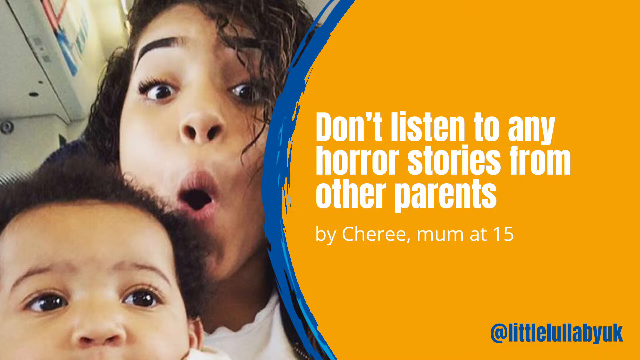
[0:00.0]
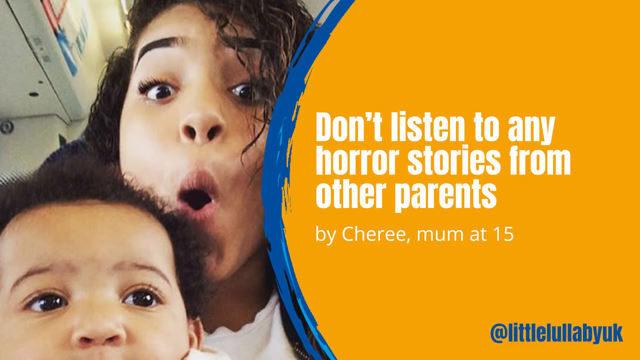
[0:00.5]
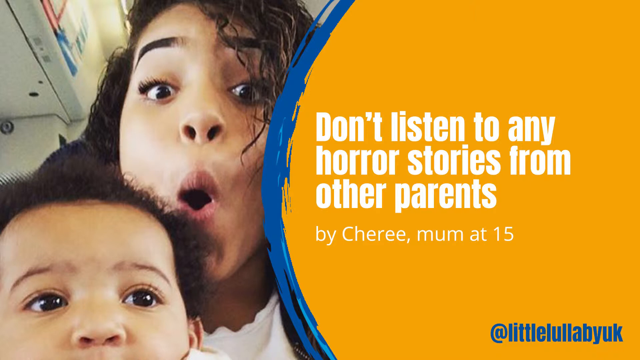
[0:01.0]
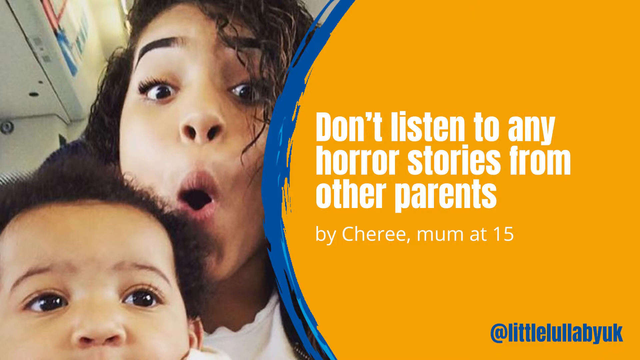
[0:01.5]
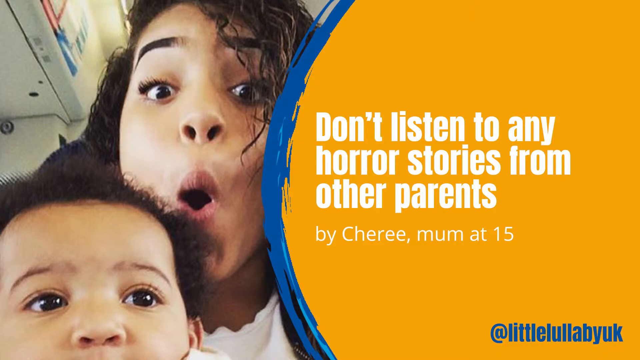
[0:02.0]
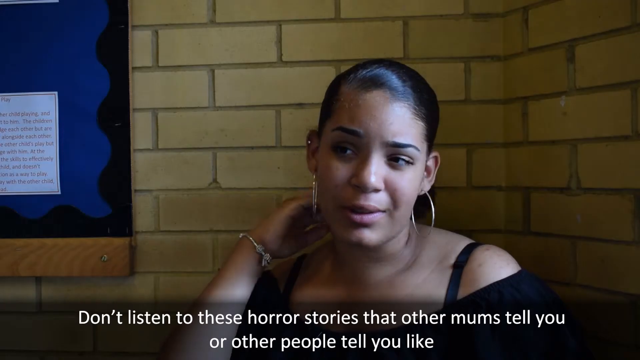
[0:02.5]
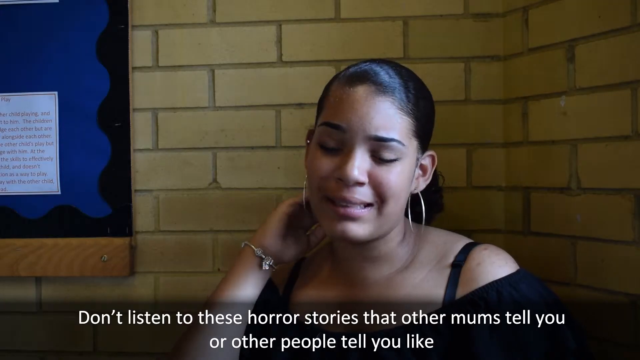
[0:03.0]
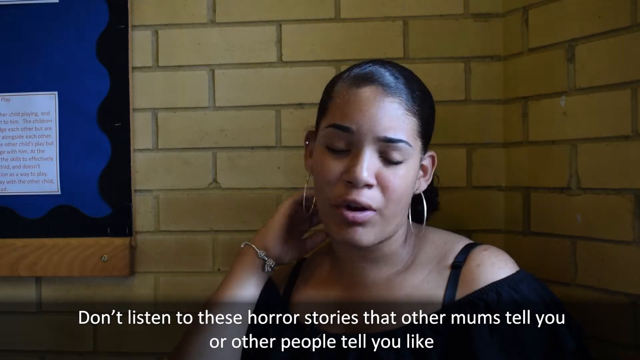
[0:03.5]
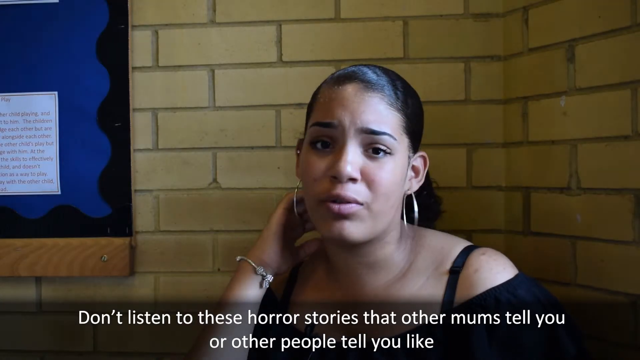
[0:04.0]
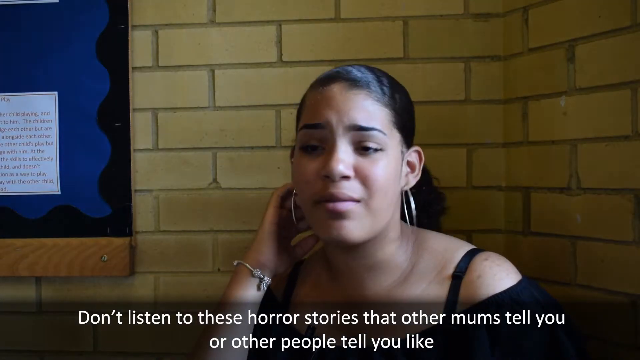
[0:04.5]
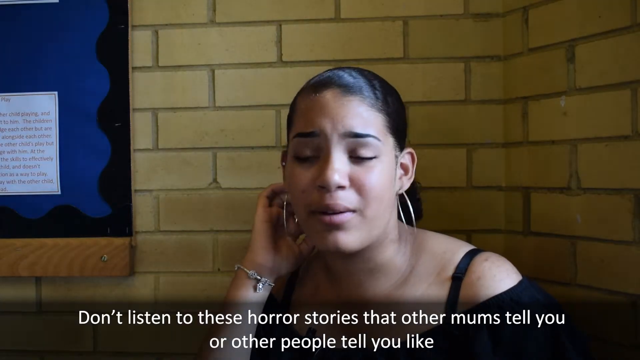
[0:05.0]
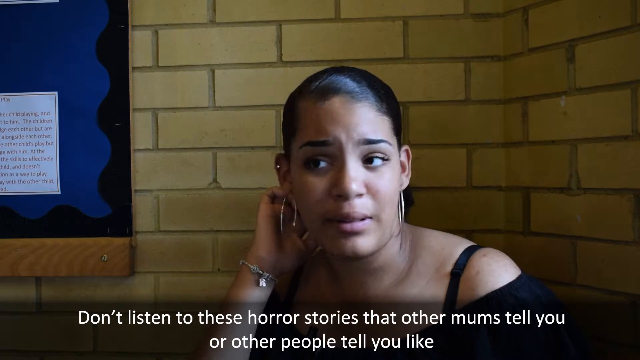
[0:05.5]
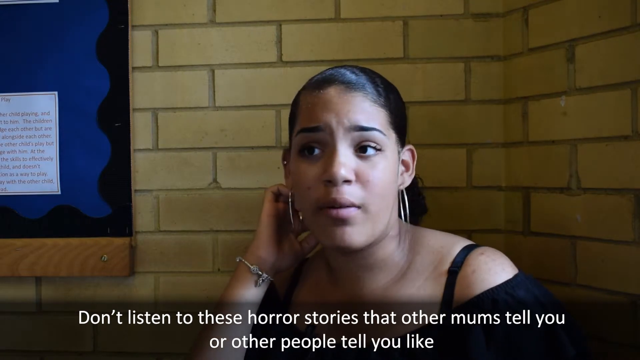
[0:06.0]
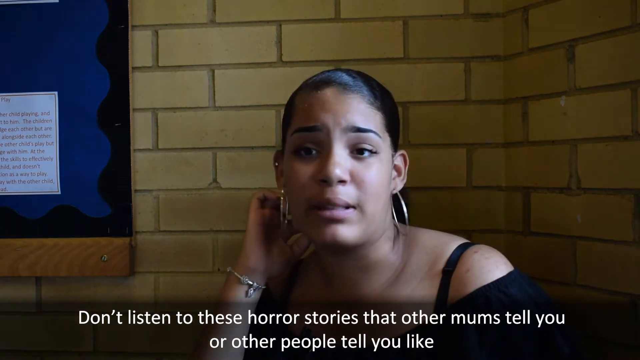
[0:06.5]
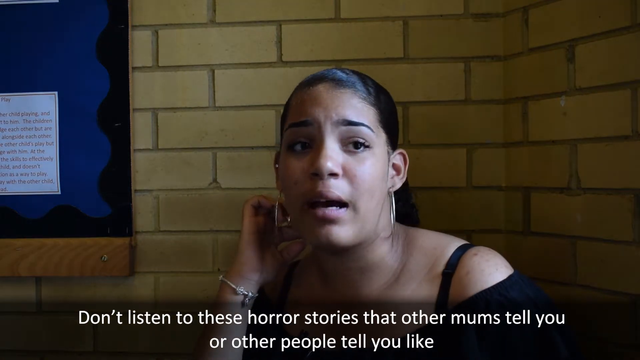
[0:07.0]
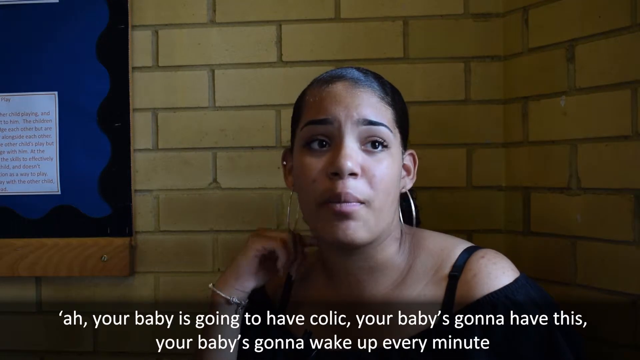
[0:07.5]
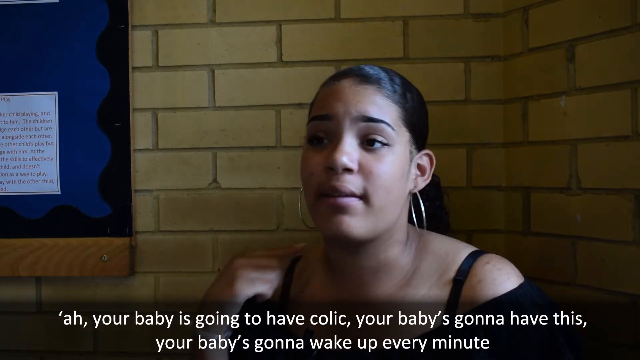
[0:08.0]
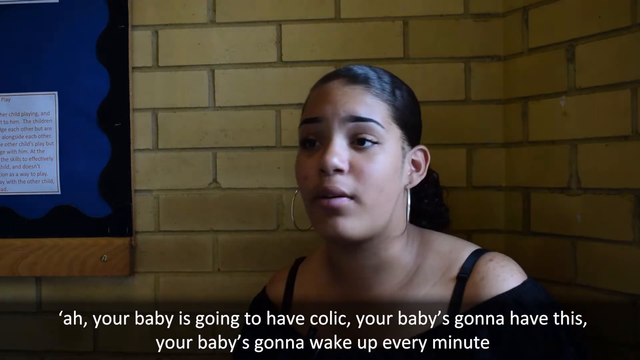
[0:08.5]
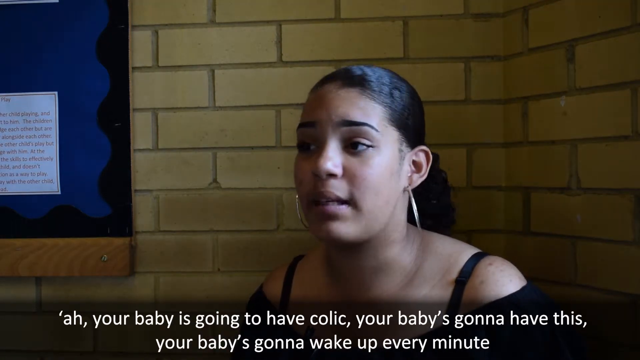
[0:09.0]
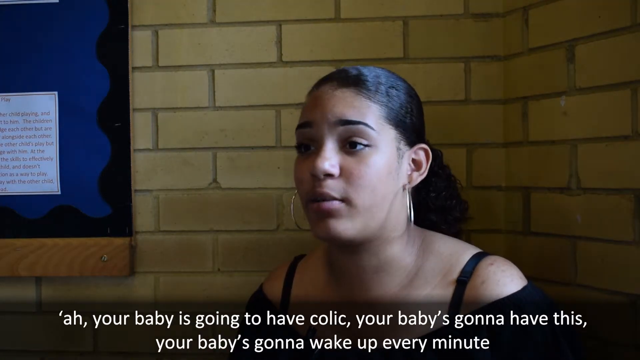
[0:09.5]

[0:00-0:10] The video is a slideshow presentation. On the left-hand side of the screen is an image of two kids, followed by a blue curve that opens toward the right, with an orange background on the right side of the screen bearing the title "Don't listen to any horror stories from other parents by Chiri, mom at 15." The slide then advances to an interview-style video of a Black mother sitting in a corner with a brick background. She speaks while a caption in white text appears at the bottom of the screen. She shakes her head in a dramatic manner, showing her large gold hoop earrings, and places her hand on her head; her hair is in a glossy, slicked-back style.